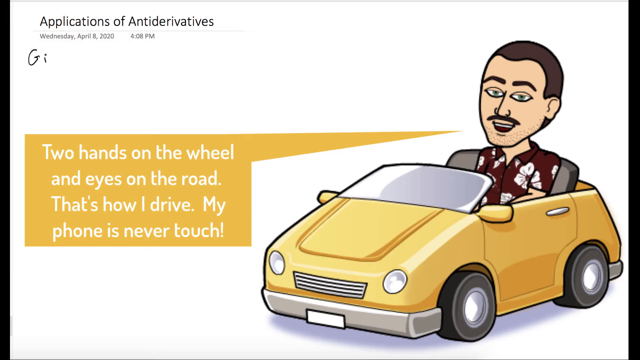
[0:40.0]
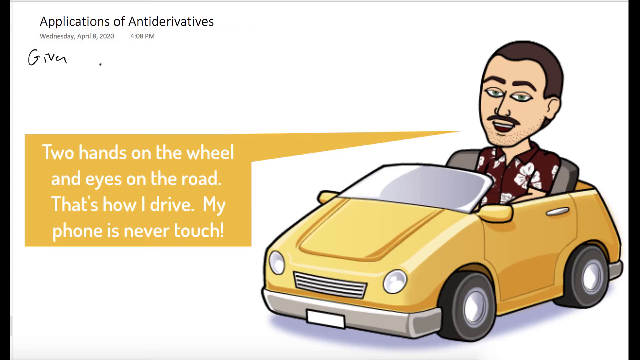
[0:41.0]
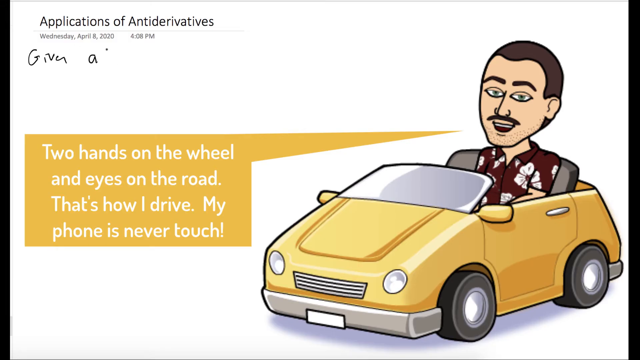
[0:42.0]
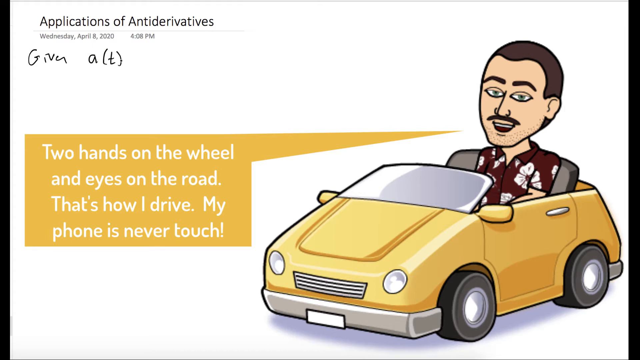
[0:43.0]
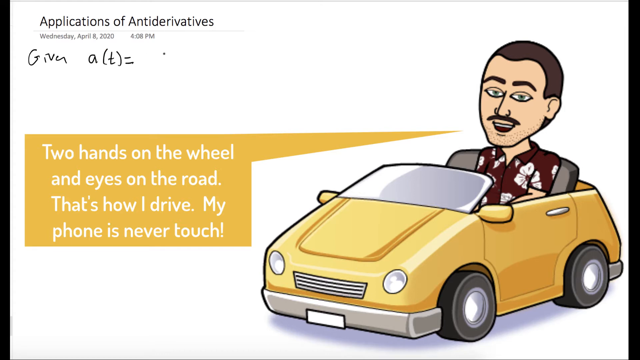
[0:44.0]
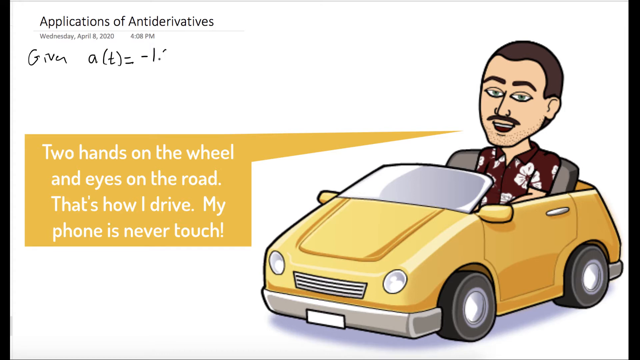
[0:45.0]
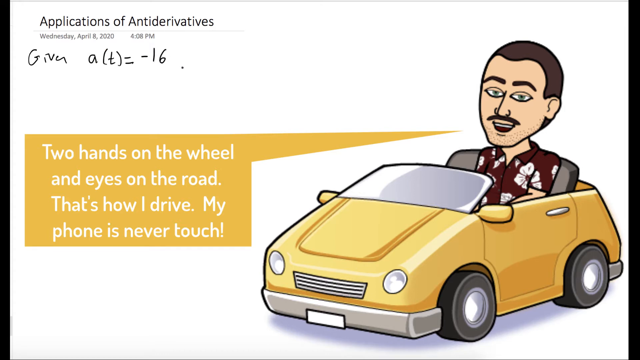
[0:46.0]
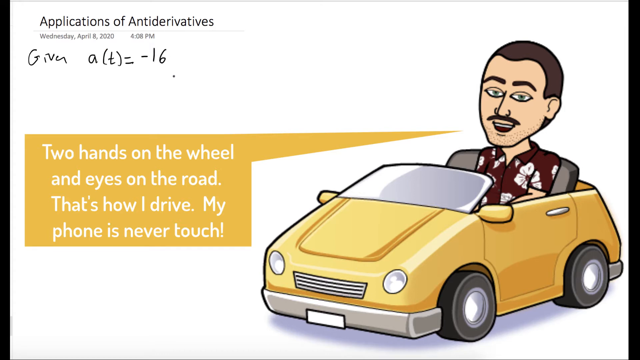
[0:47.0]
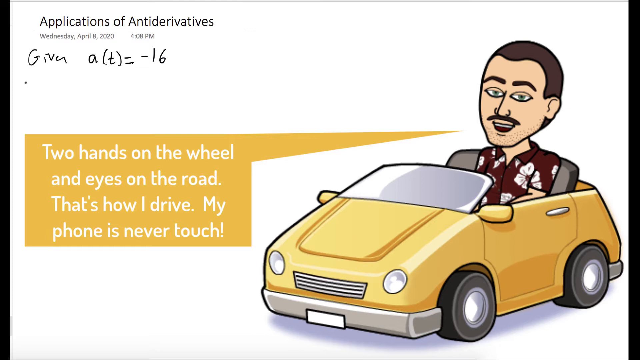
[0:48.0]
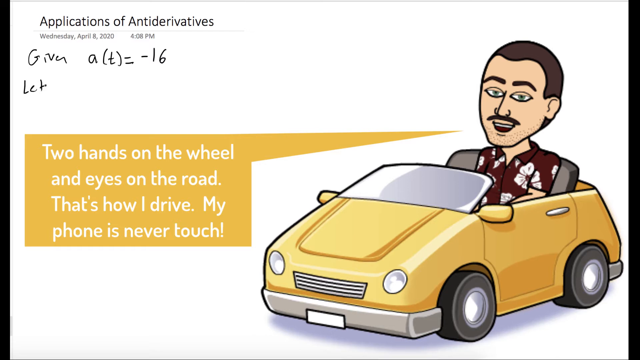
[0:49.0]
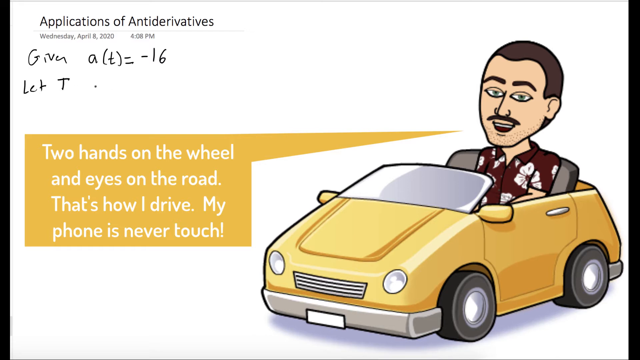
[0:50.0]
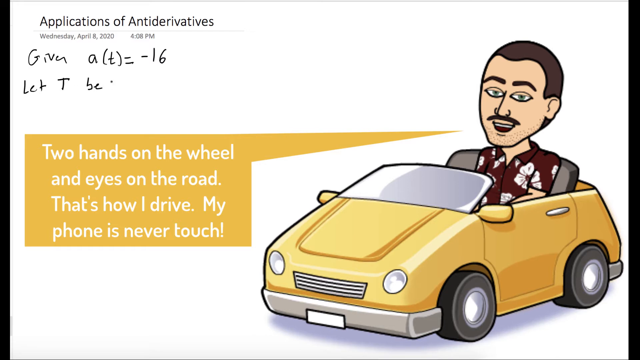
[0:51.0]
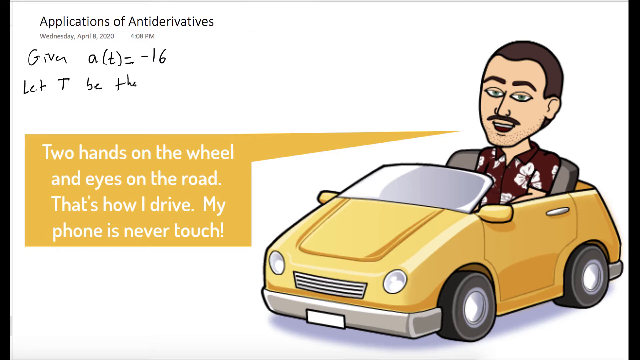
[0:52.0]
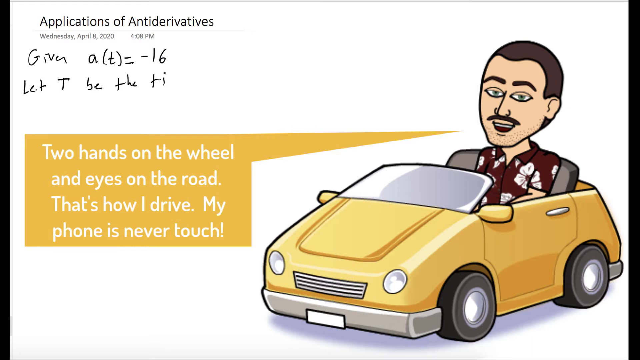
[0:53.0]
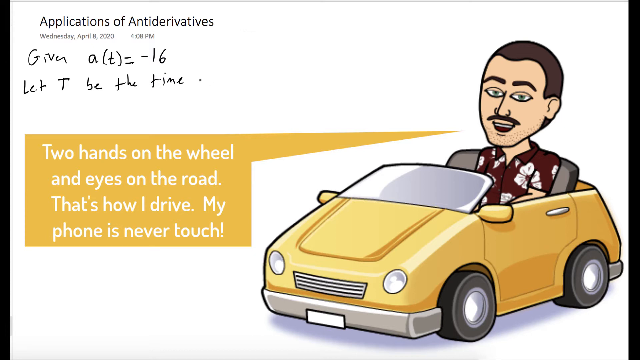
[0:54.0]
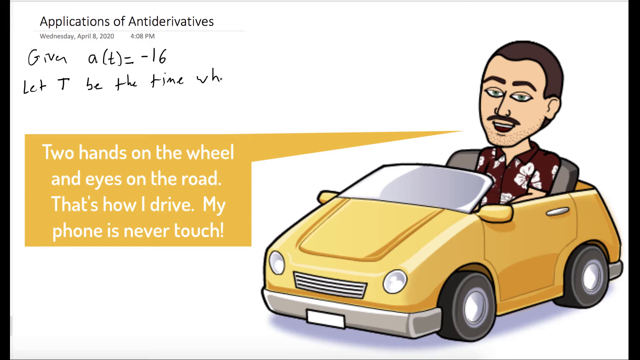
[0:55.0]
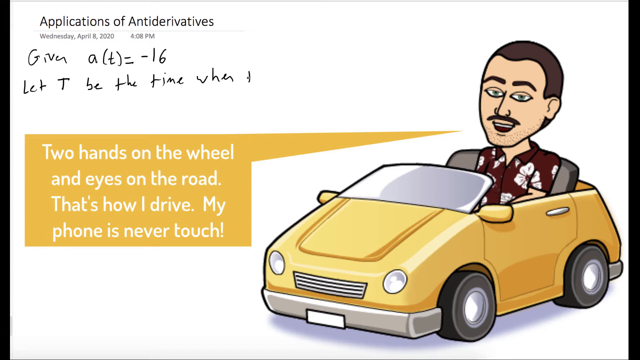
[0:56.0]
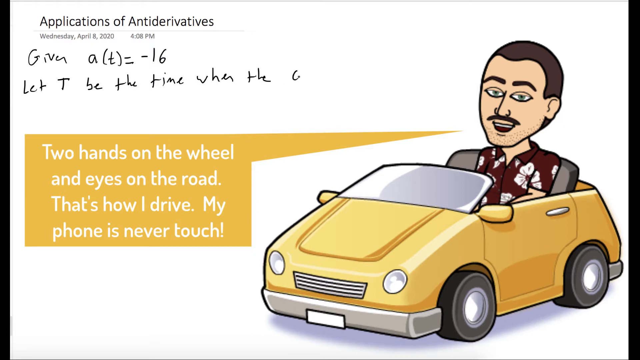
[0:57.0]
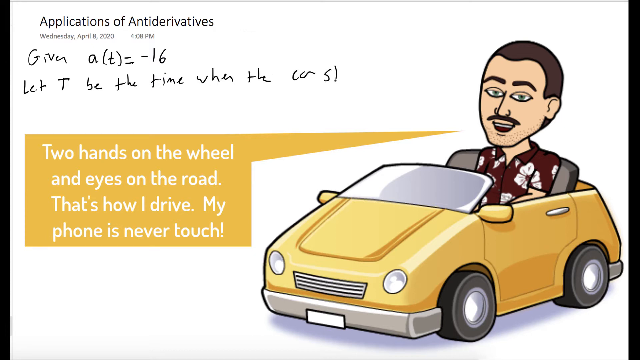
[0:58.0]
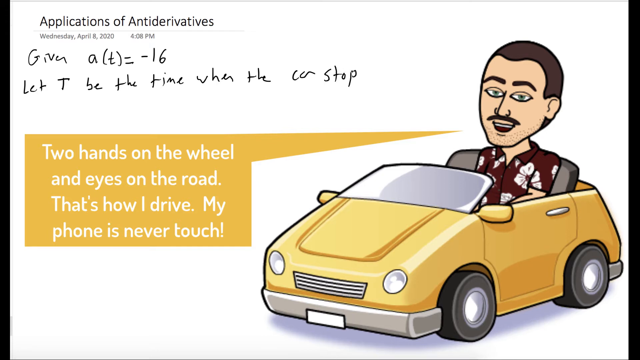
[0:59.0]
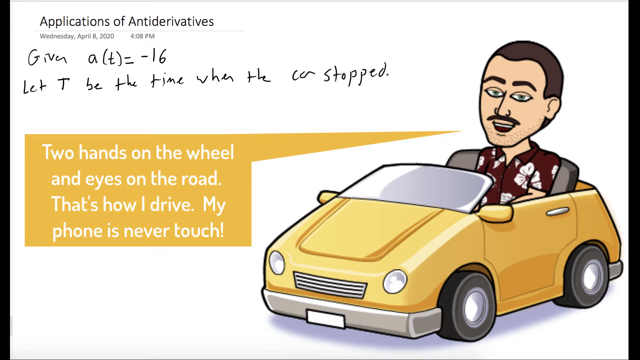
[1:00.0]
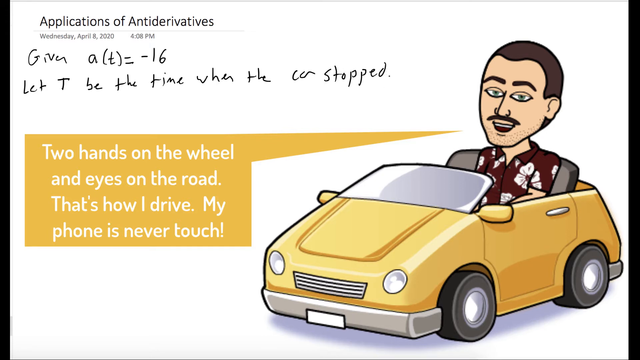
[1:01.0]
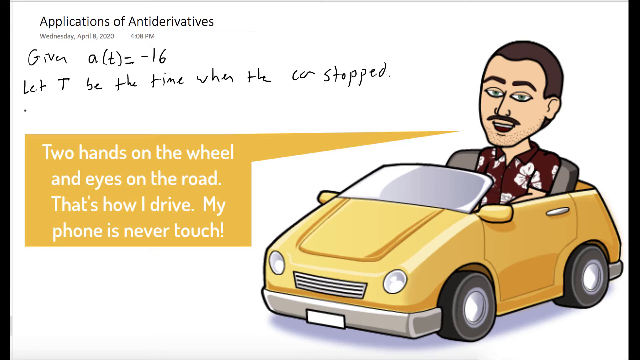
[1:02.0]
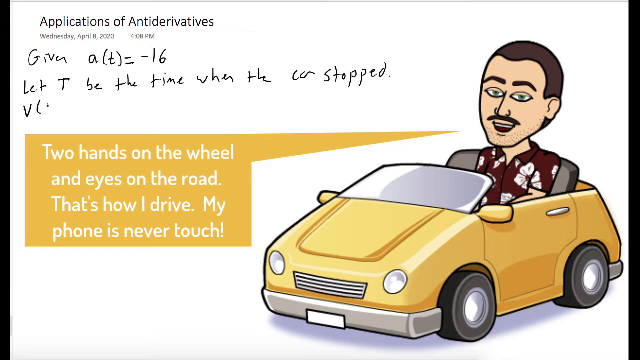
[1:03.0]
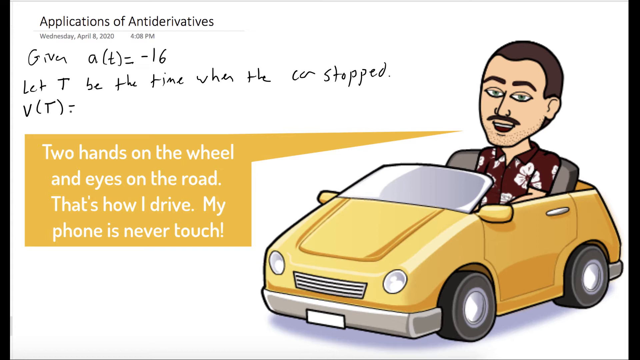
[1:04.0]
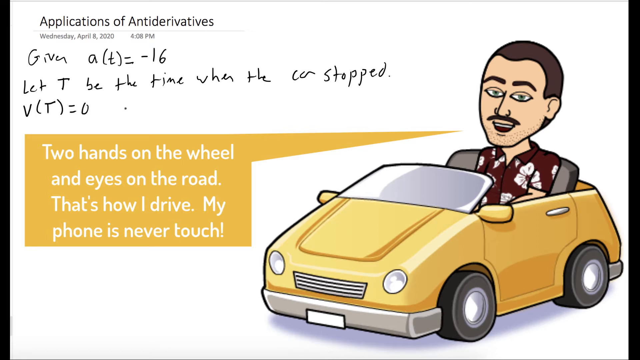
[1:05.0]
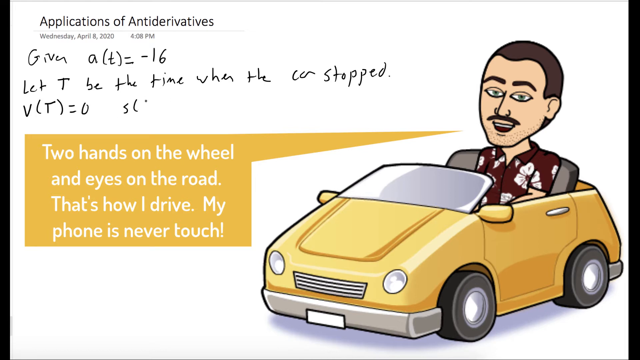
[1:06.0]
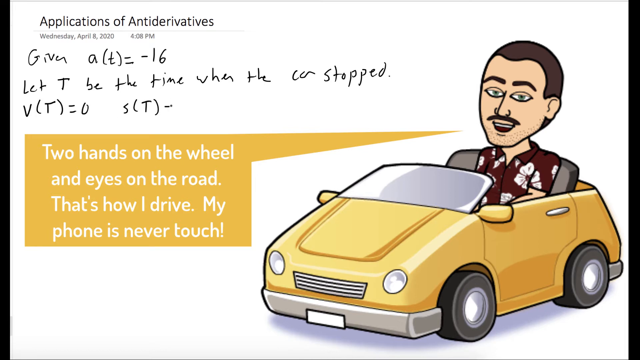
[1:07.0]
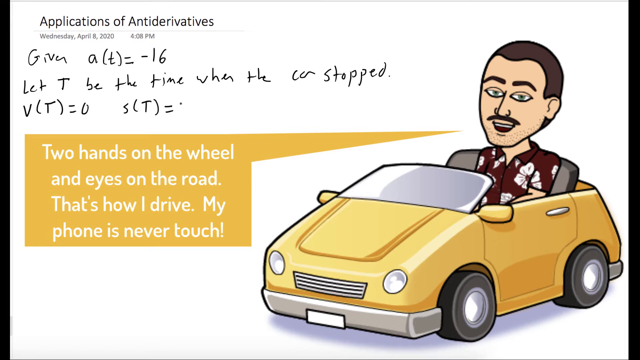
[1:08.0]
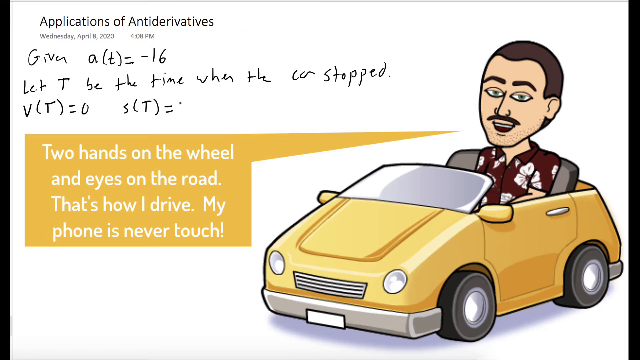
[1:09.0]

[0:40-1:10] An illustration shows the man in the Hawaiian shirt seated in a yellow convertible car on the right of the screen. A yellow speech bubble comes from his mouth, with white text that says "two hands on the wheel and eyes on the road, that's how I drive." Grey text in the top left corner says "applications of anti-derivatives, Wednesday April 8, 2020, 4.08pm." Cursive writing gradually appears underneath it, looking like a scribbled mathematical equation; it says "given a t equals minus 16, let t be the time when the car stopped, v t equals 0, s t equals 200." The man in the yellow car has a moustache, dark hair and dark eyebrows. He seems to be smiling, and his mouth is open as though he is speaking directly to the viewer.